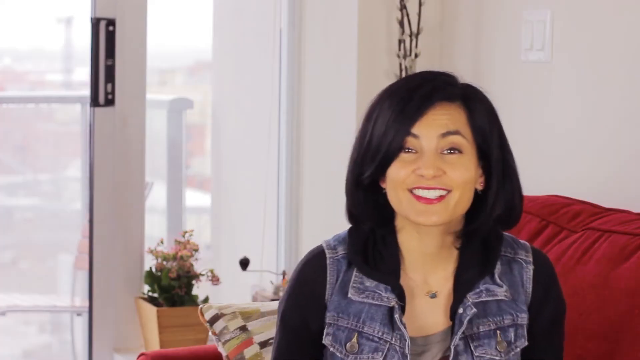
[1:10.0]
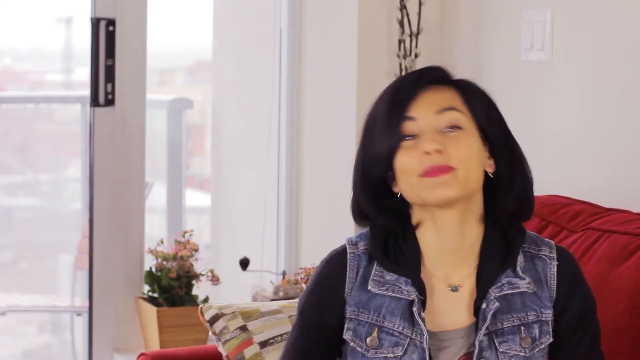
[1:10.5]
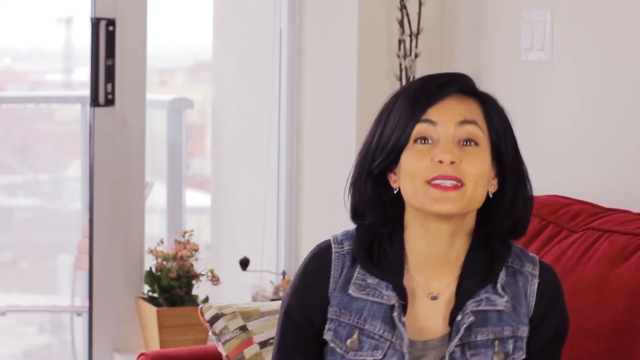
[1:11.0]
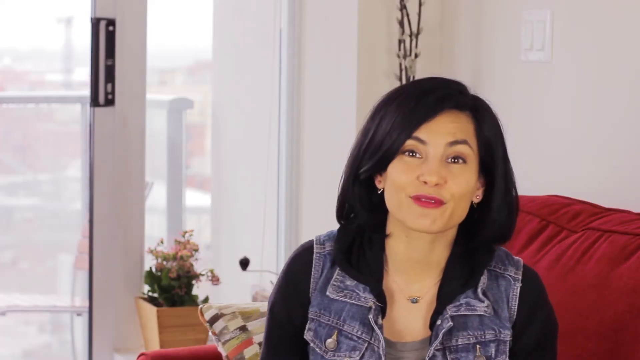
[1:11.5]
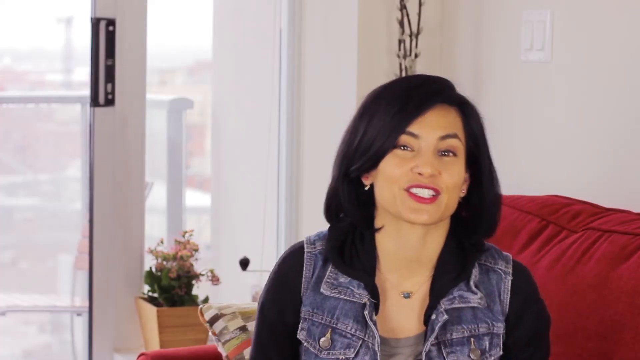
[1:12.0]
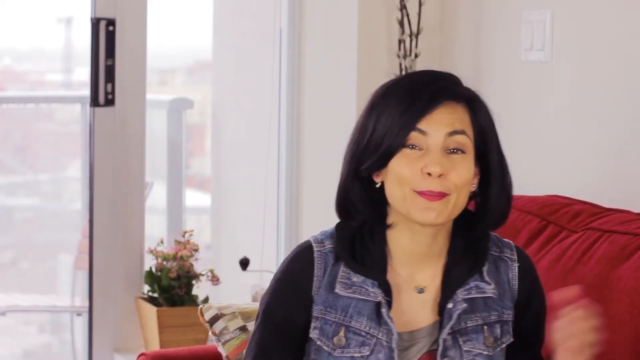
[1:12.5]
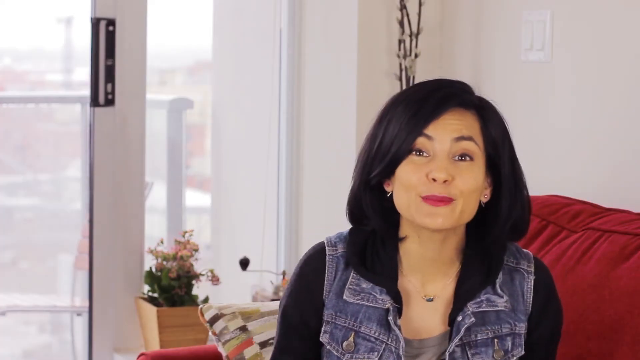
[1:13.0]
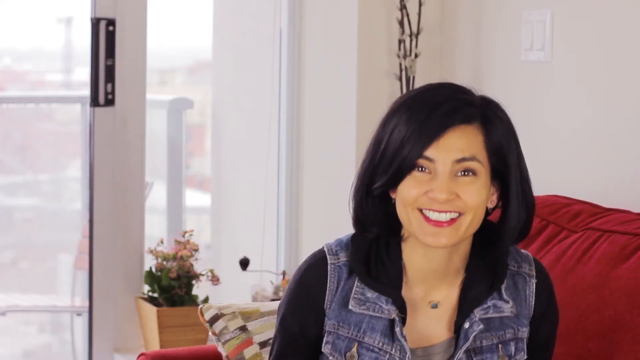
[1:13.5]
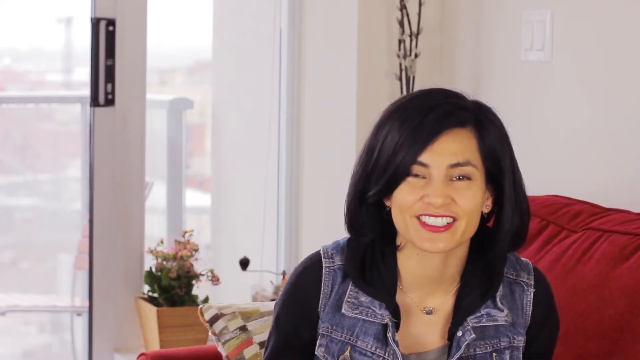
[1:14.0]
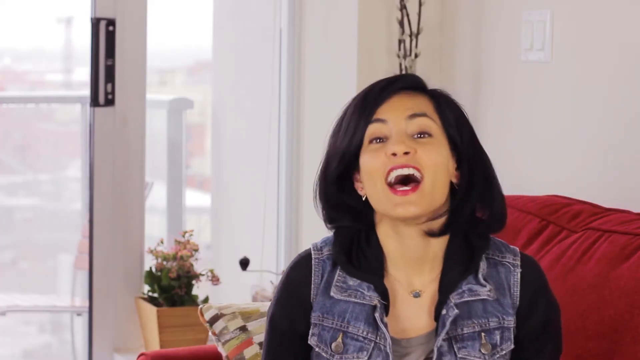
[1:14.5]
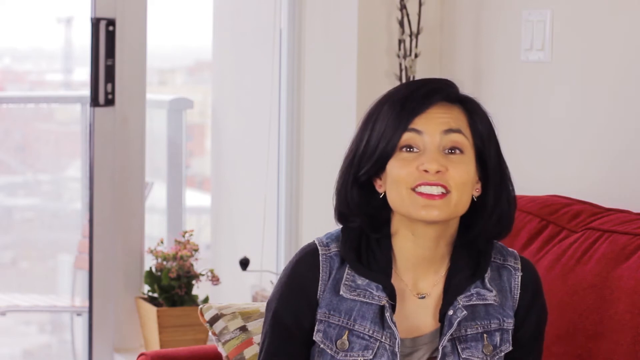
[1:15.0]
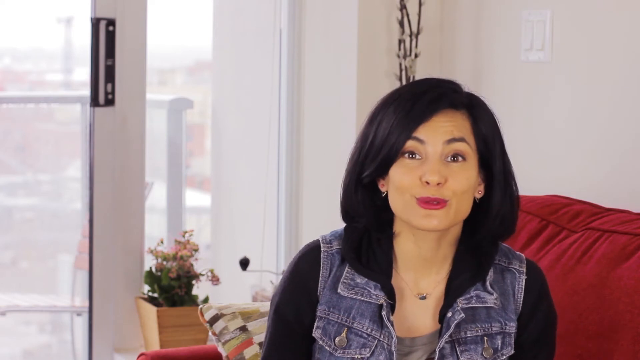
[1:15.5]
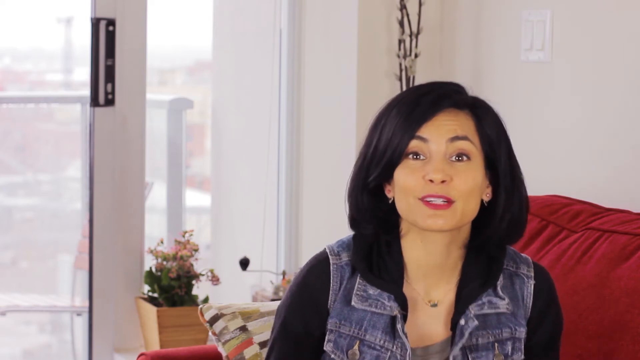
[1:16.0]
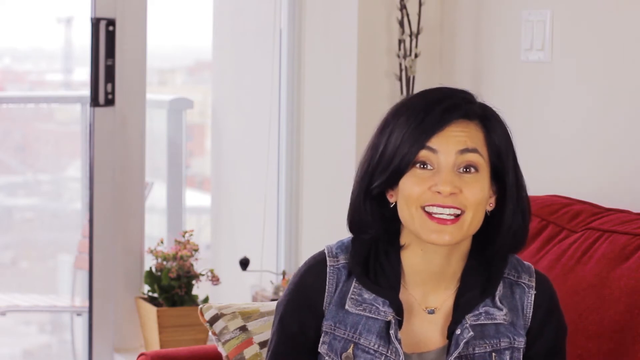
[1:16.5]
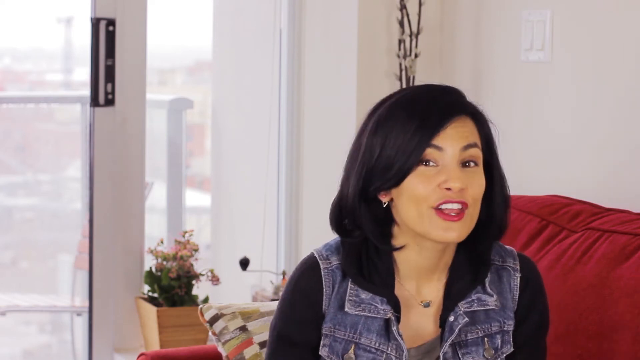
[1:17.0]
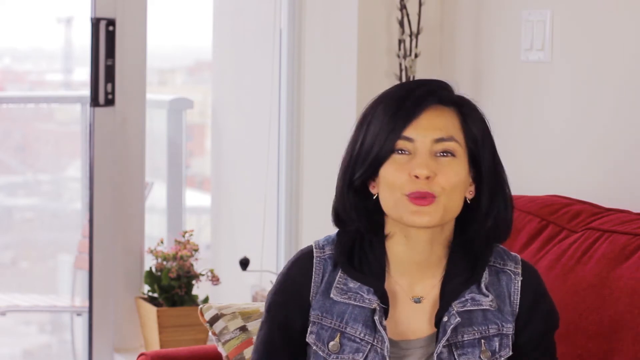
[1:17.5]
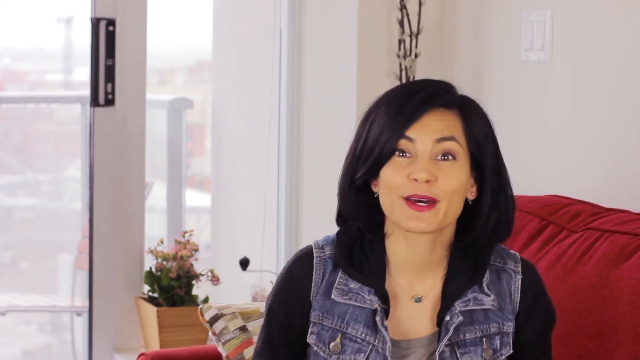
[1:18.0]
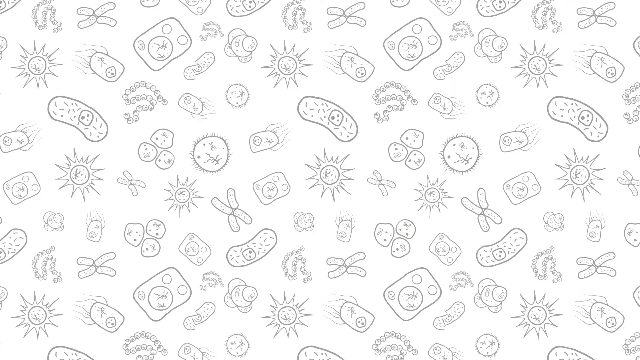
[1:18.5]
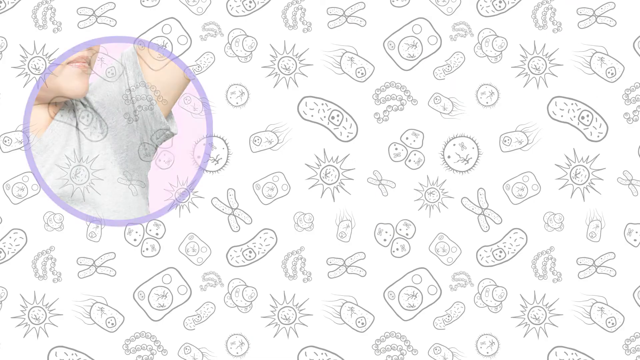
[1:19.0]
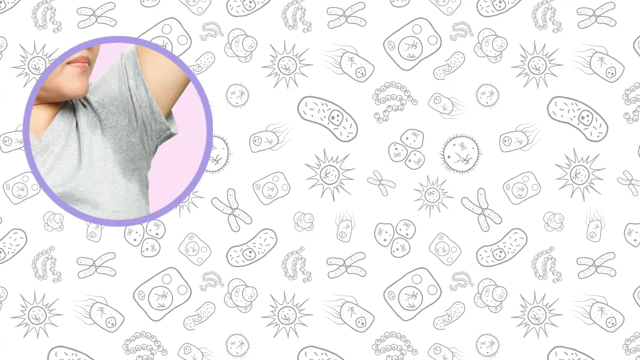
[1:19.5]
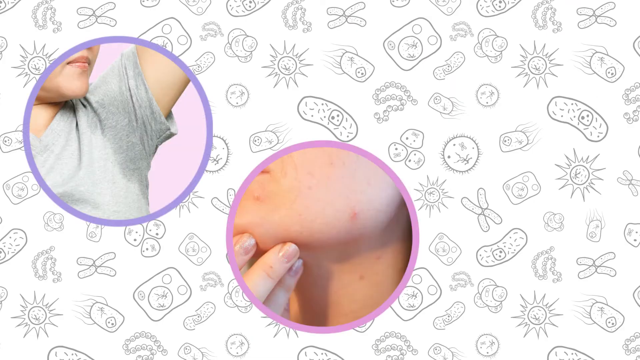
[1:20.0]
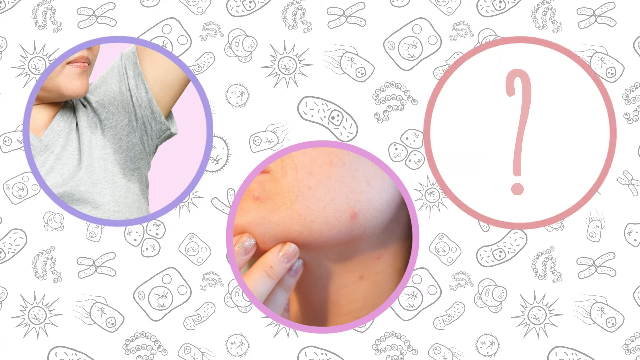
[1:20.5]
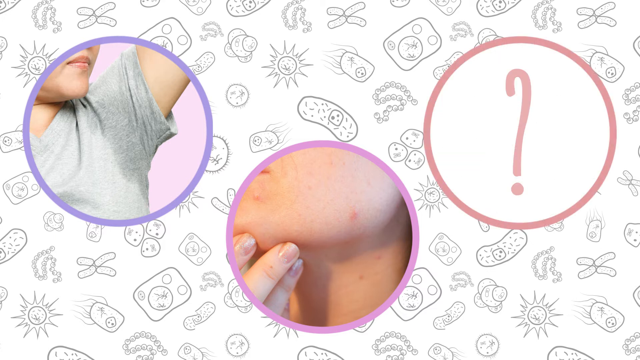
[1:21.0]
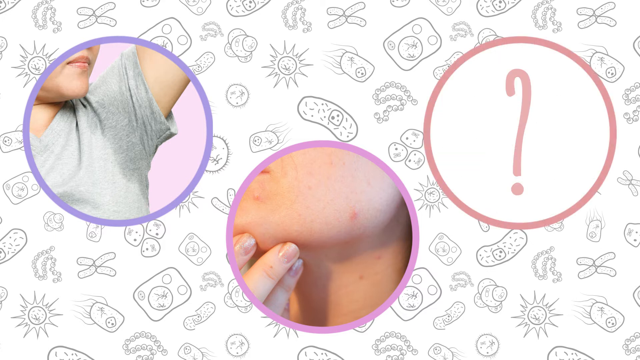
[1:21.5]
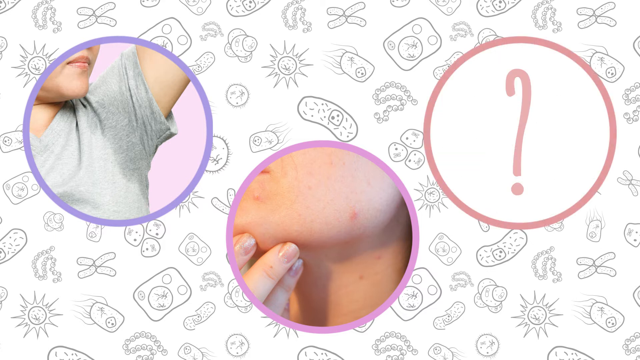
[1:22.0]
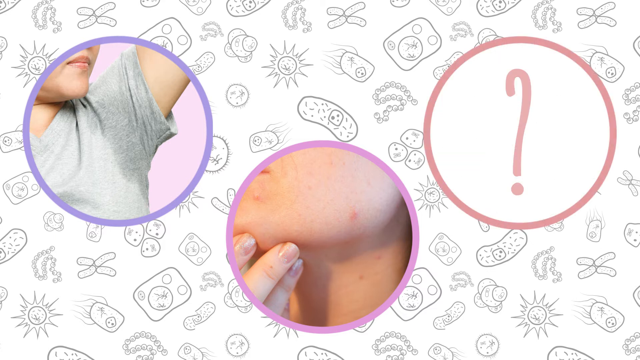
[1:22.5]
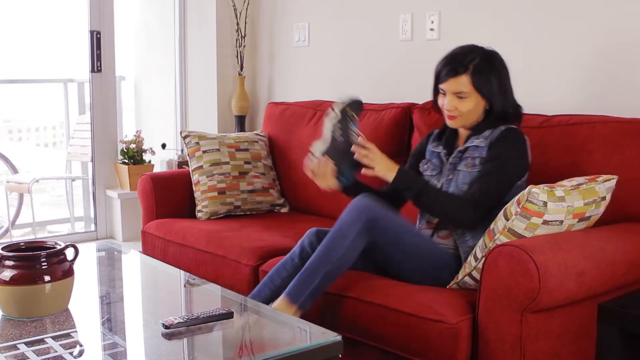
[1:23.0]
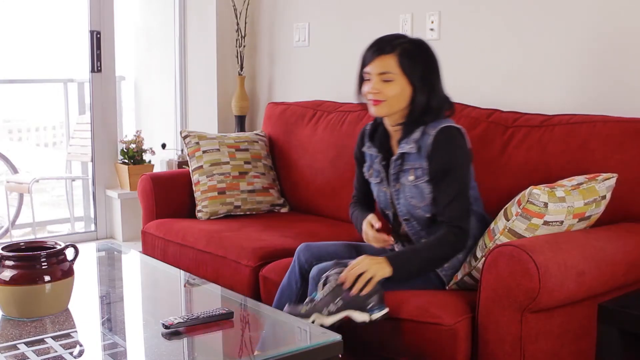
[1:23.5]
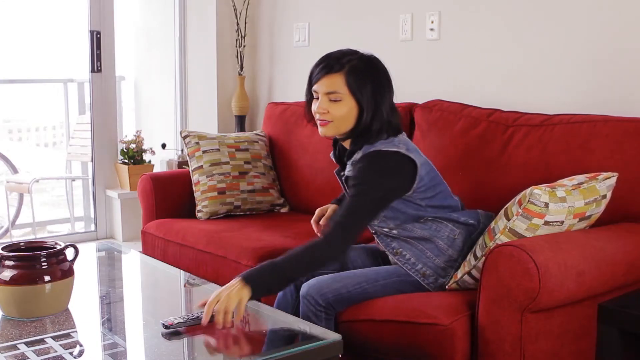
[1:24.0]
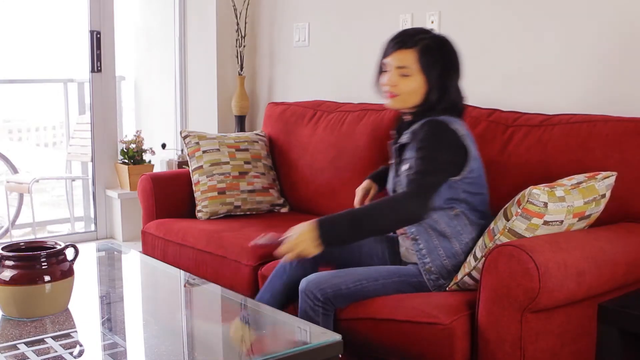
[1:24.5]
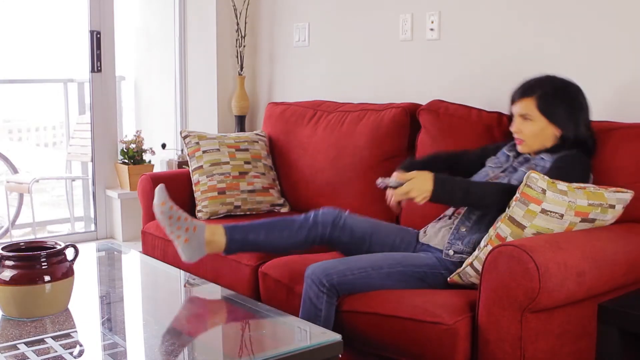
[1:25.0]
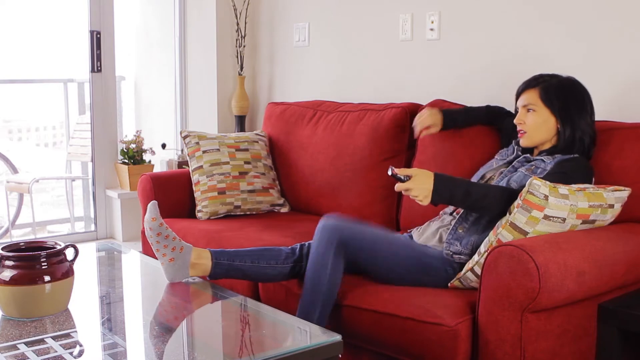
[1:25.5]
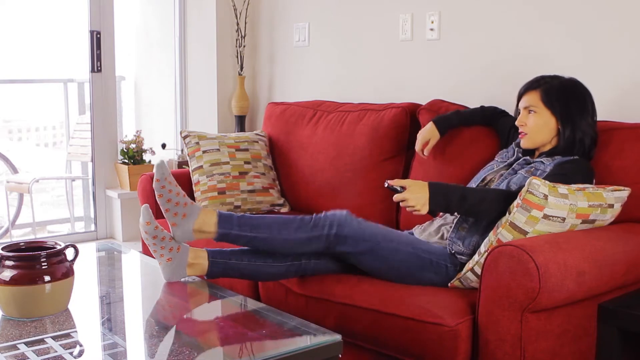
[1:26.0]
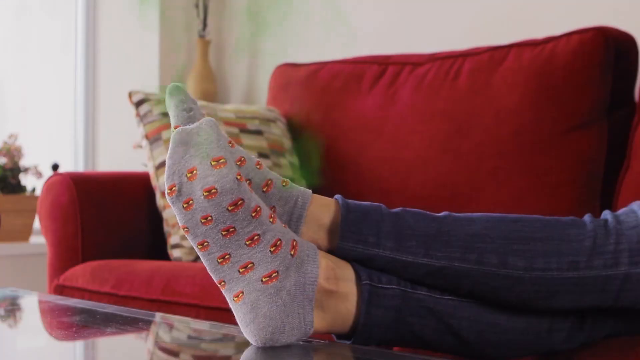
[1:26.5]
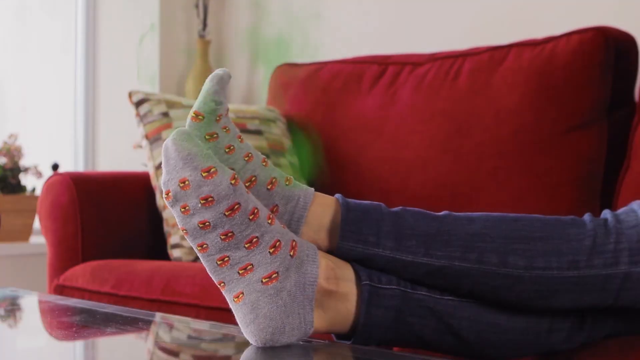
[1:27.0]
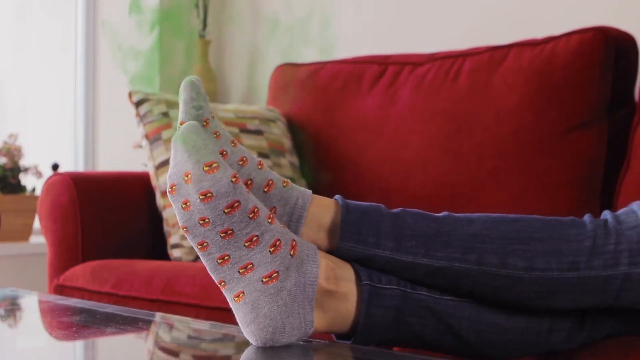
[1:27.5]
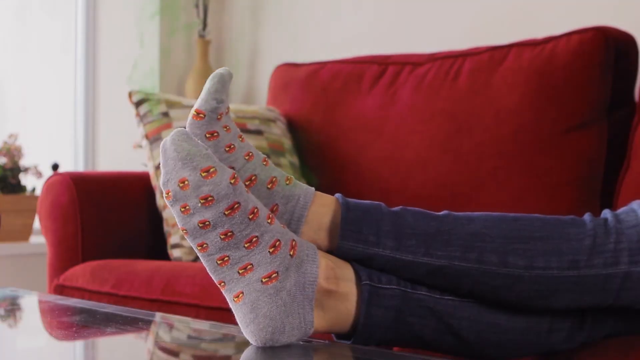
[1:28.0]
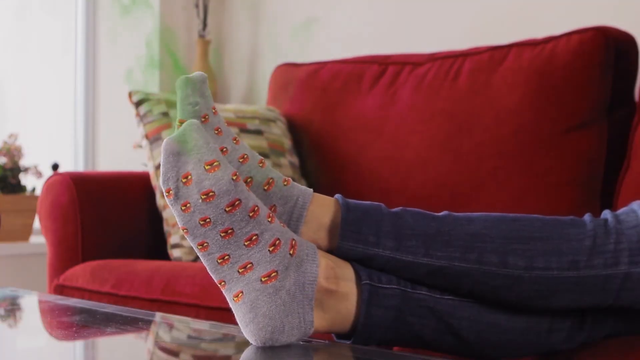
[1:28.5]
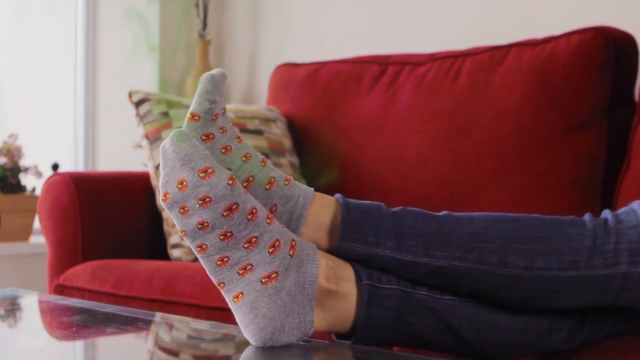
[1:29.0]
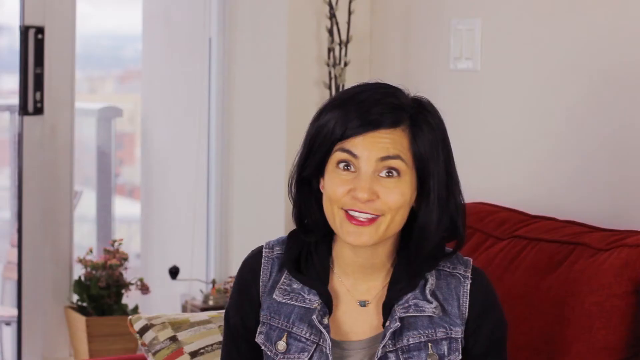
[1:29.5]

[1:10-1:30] The woman sits on the chair, slightly shifts her body position to sit properly, and smiles while looking directly at the camera. She is wearing earrings. The scene changes to a white backdrop with cartoon illustrations of viruses and bacteria. An image in a purple circle on a pink background shows a woman who seems to be showing her sweaty armpits. Another pop-up on the right, just below the middle, shows in a pink circle a woman holding her chin as she shows what looks like acne. A third pink circle appears on the right with a question mark in the middle. The video cuts back to the woman from another angle in an almost full-body shot: she wears jeans and takes off what look like running shoes. There is a note on the table, which is glass and shows a reflection from outside. She takes the remote and puts her feet across the table, and smoke comes from her socks while she seems to be smiling. A close-up of her follows.